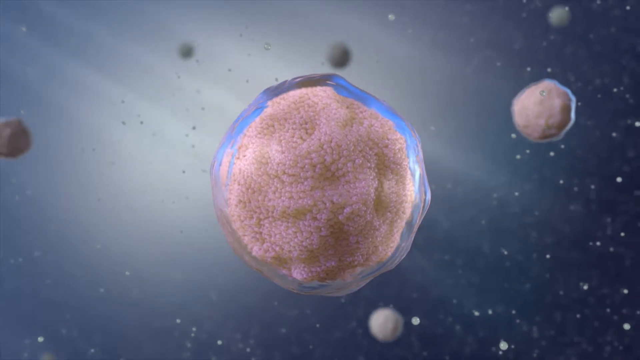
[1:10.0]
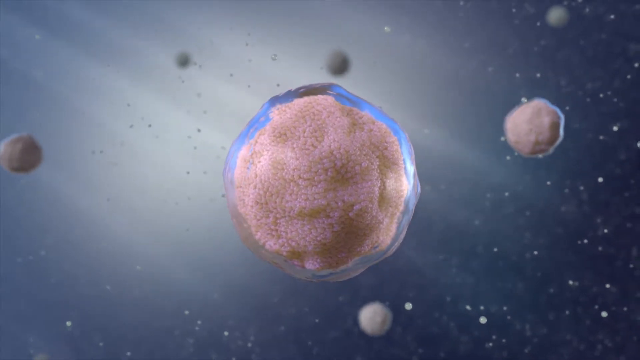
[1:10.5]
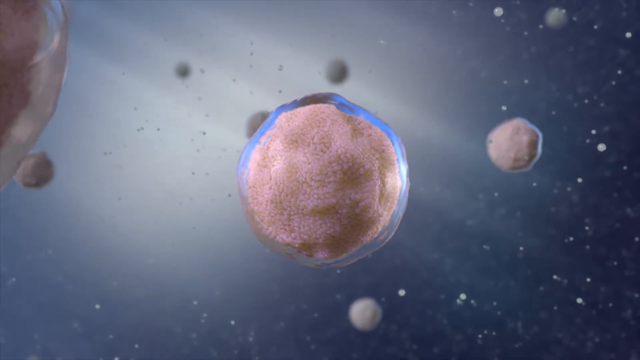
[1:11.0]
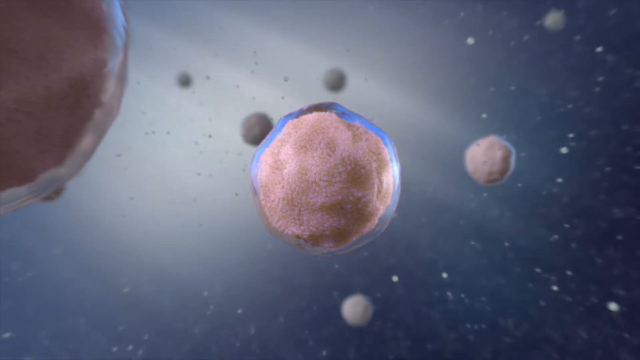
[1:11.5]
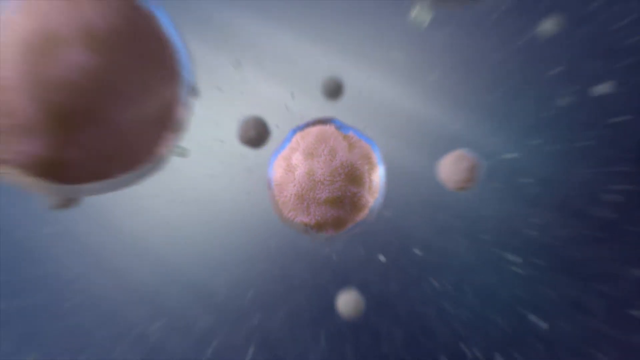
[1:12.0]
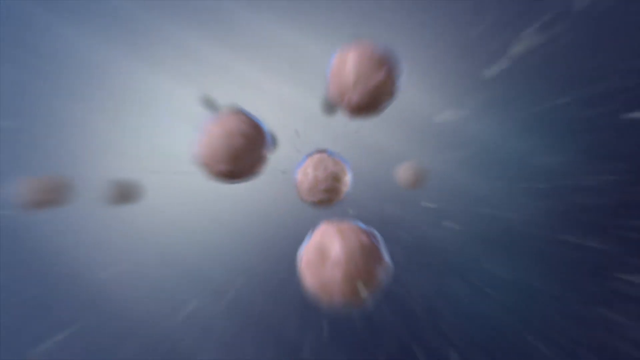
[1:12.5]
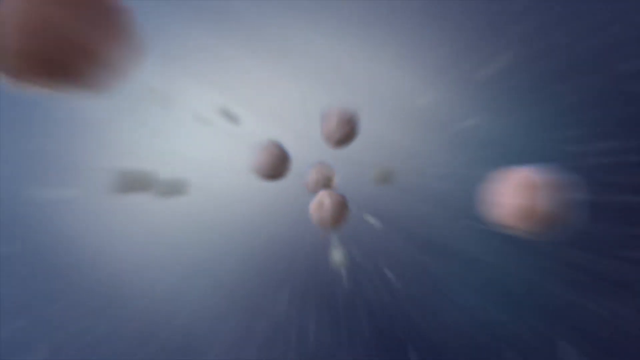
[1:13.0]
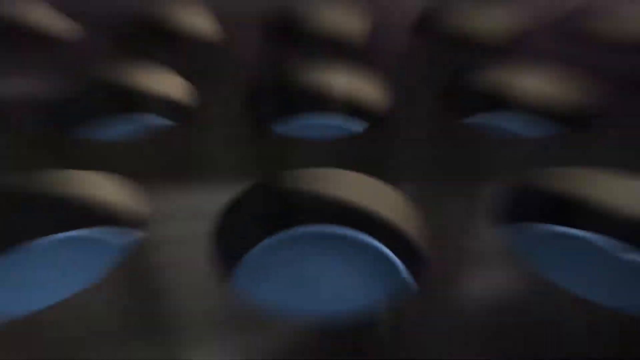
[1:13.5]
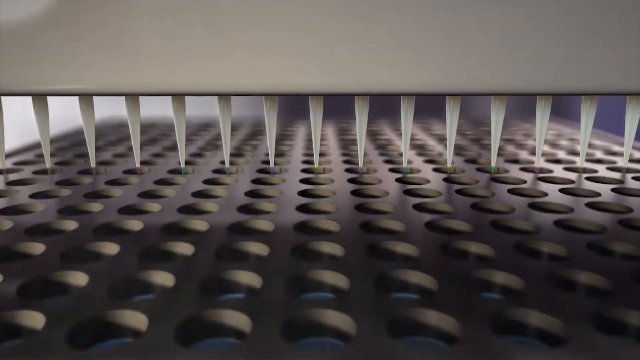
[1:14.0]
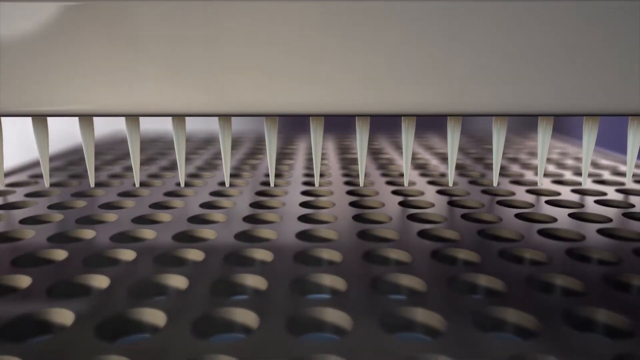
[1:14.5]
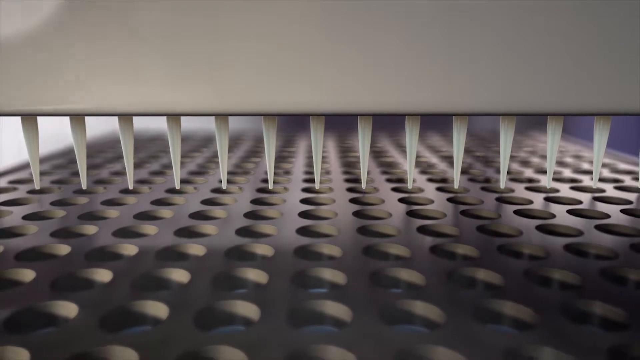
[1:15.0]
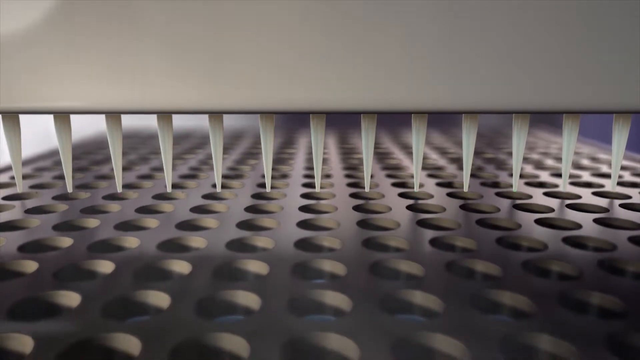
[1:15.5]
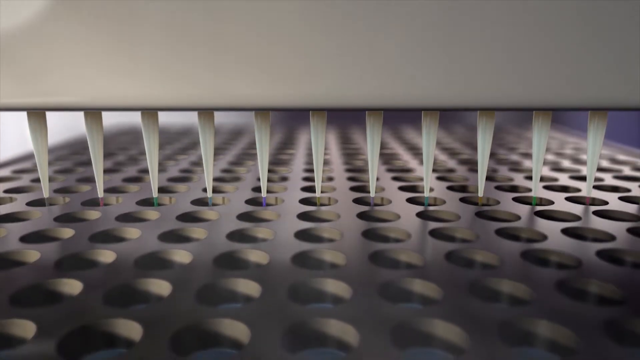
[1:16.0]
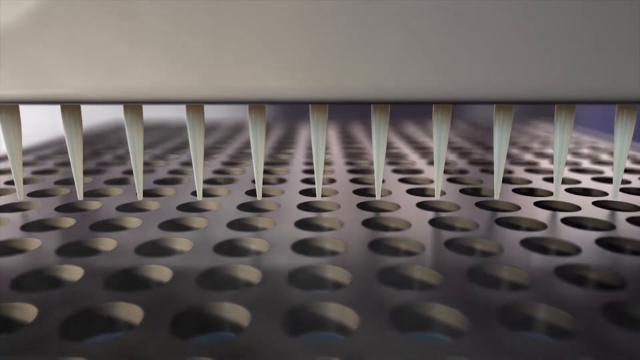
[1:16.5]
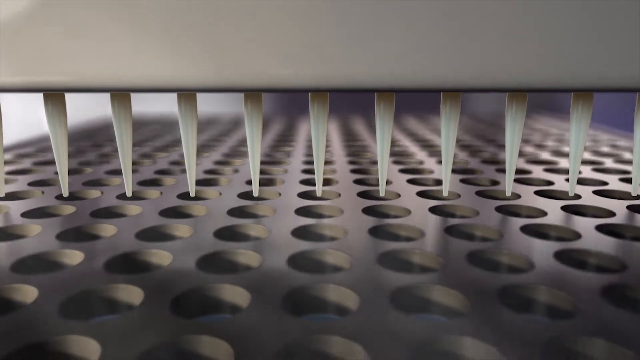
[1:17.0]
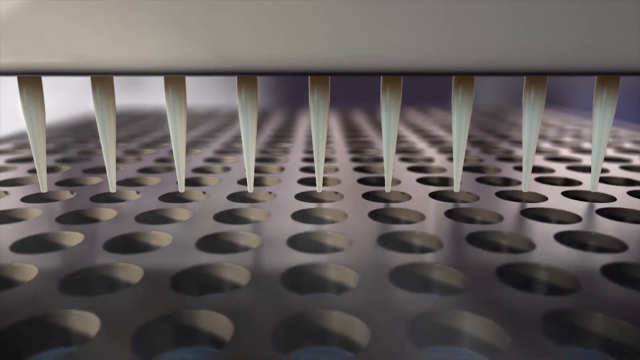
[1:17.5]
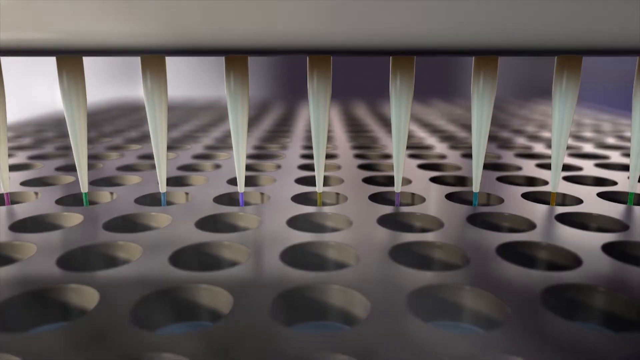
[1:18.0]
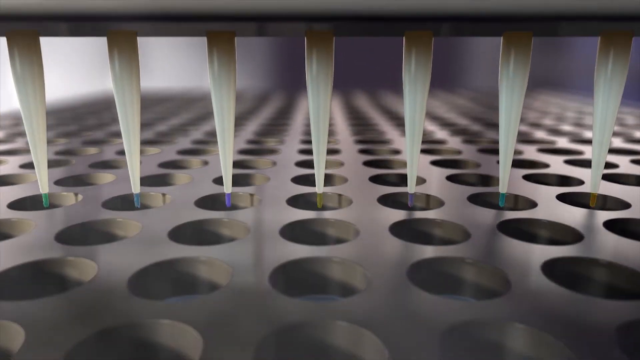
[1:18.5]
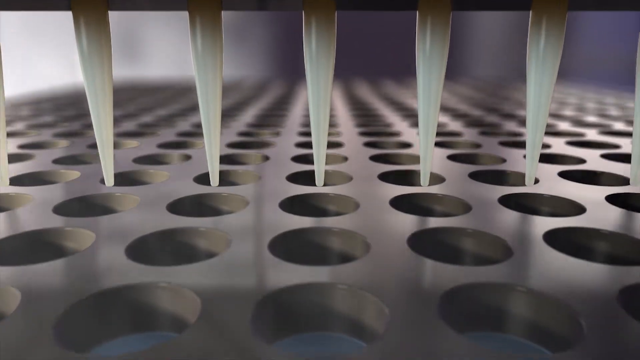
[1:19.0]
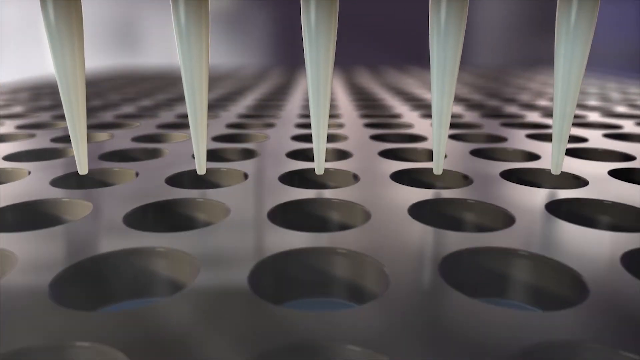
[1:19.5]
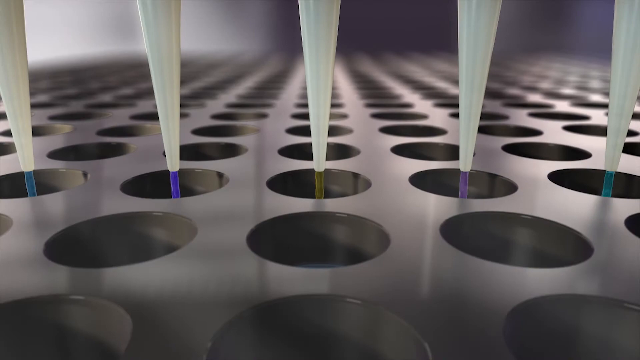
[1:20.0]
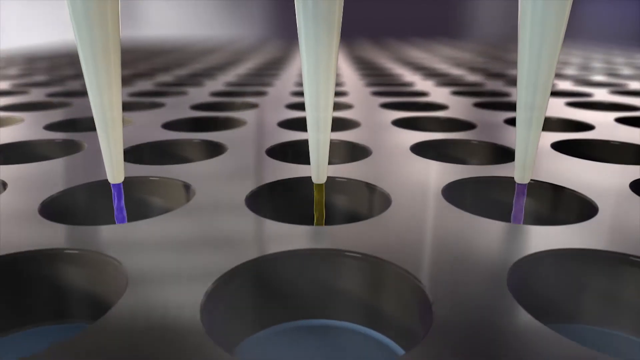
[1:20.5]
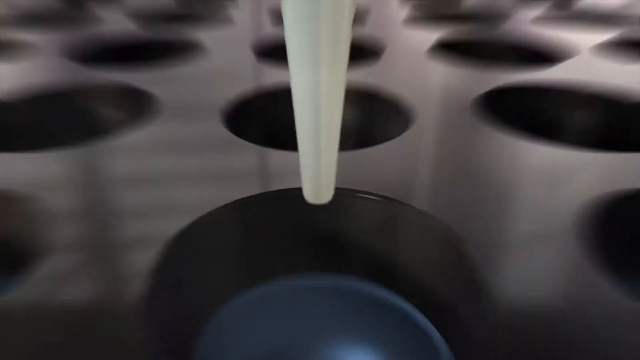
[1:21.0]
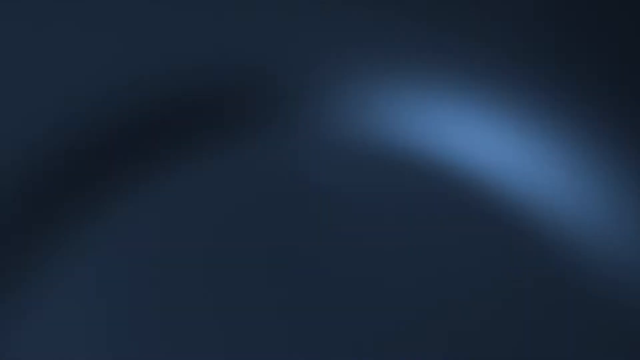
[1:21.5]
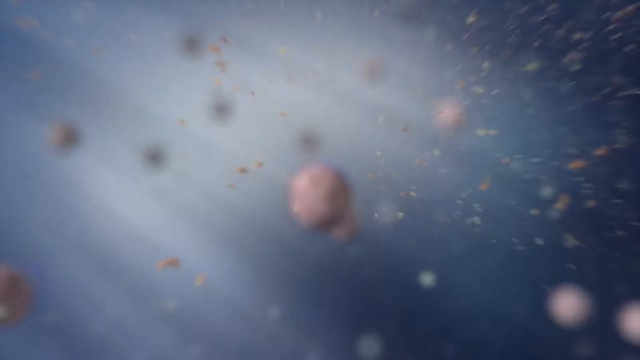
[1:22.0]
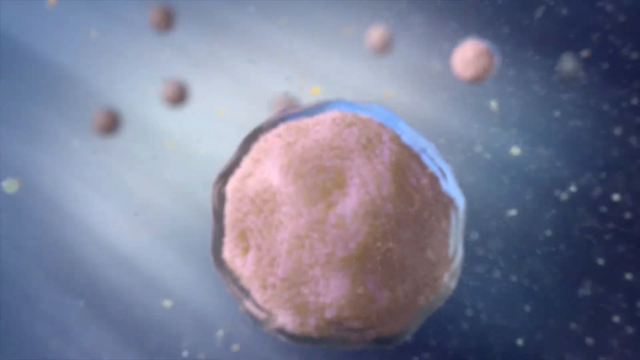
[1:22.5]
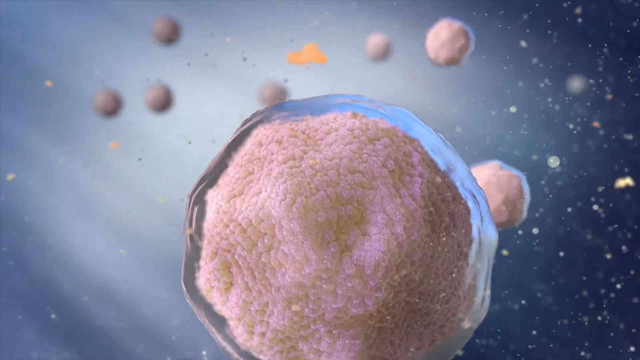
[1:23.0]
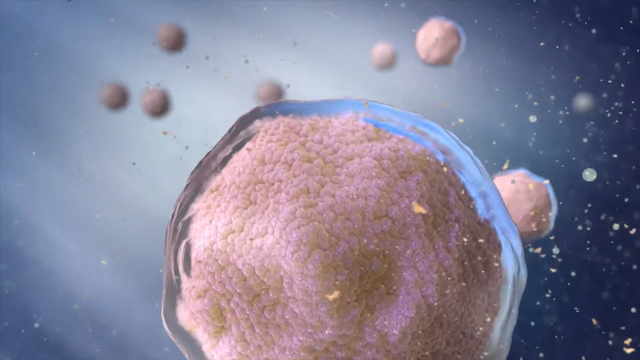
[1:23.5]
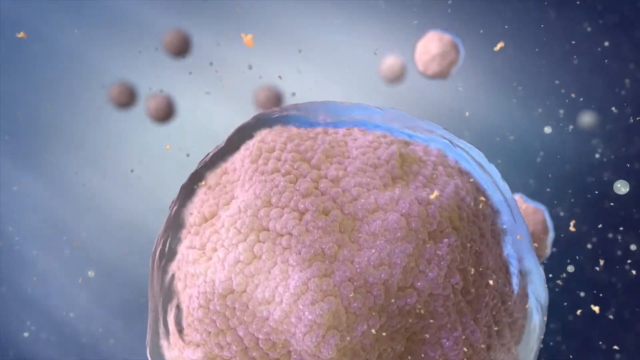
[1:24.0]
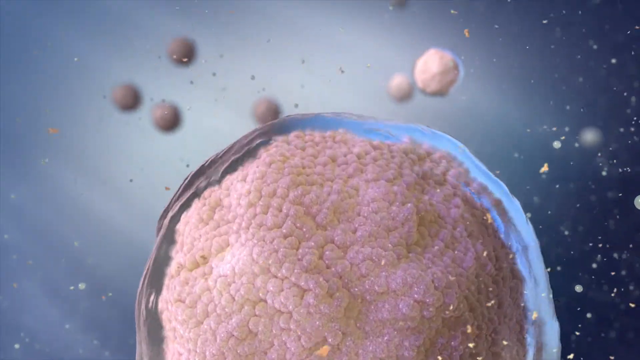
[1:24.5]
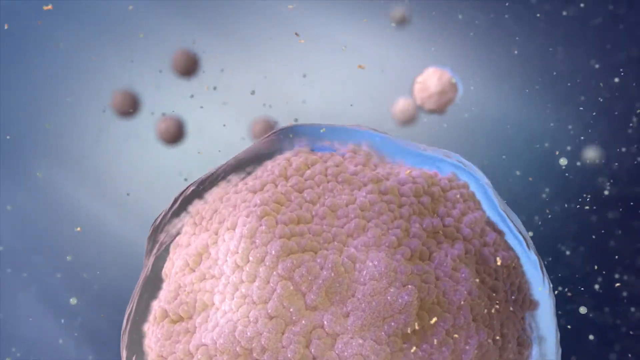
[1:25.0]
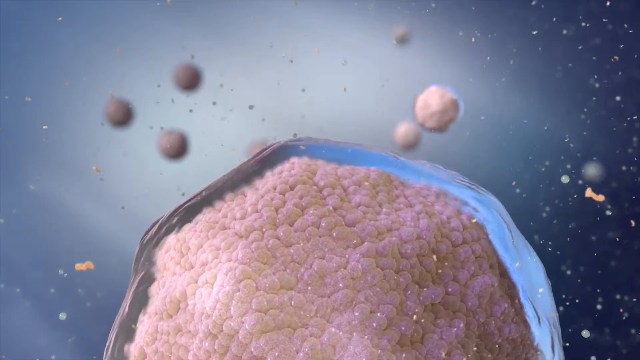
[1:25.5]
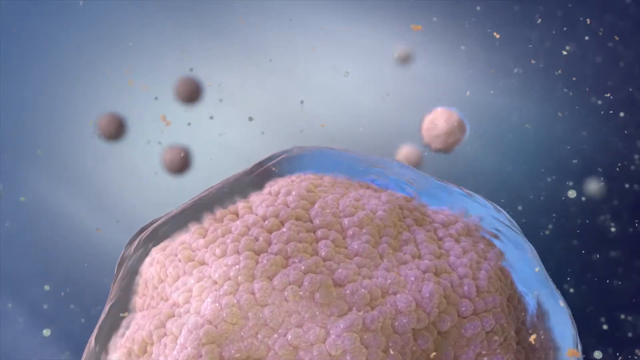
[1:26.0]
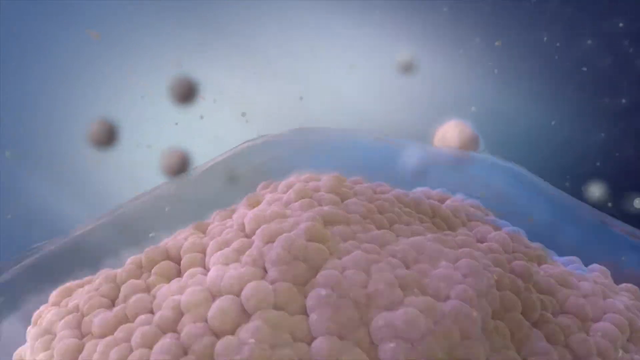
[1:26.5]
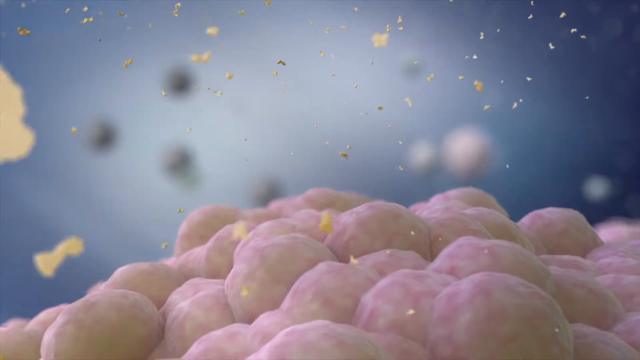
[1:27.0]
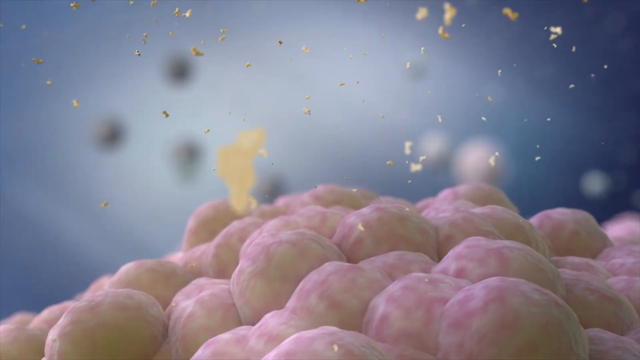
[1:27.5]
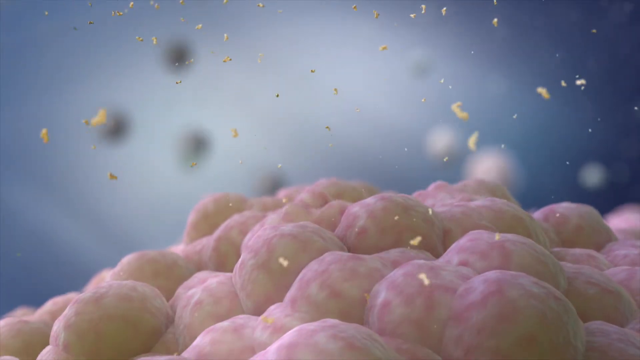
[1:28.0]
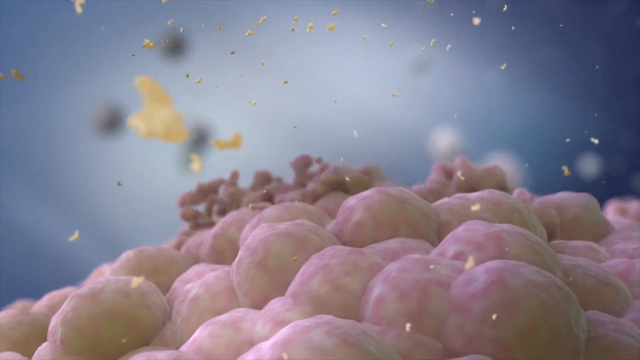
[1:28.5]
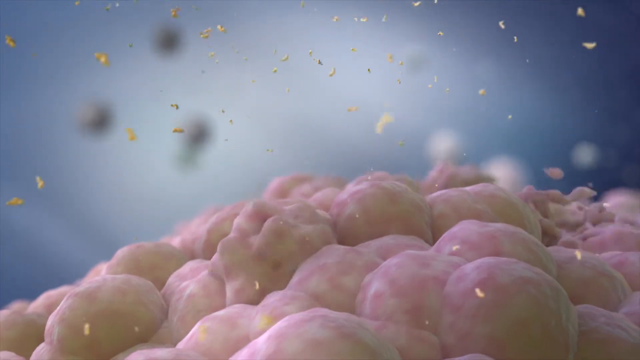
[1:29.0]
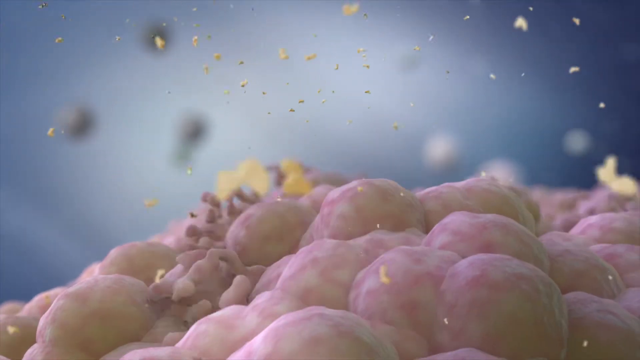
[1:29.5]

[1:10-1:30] Bacteria float around in a petri dish, seen so close and zoomed in that they look like planets flying around in the universe. The bacteria are pink and full of tiny beads, with some kind of blue plasma surrounding the outside. The camera zooms out in a very fast flying motion, and the scene turns into some kind of spiky thing on top of a platform with many holes. Each time the spikes go over a set of the holes, they release some sort of liquid into them. The spikes keep coming closer toward the camera, and up close the liquids dropping into the holes are different colors. The camera then goes into one of the holes, into a universe of little blobs of bacteria. The camera gets so close that it appears to pop the plasma on the outside of one bacterium, making it explode into what looks like confetti flying around, which lands on the bacteria and causes them to kind of bubble up as if boiling.